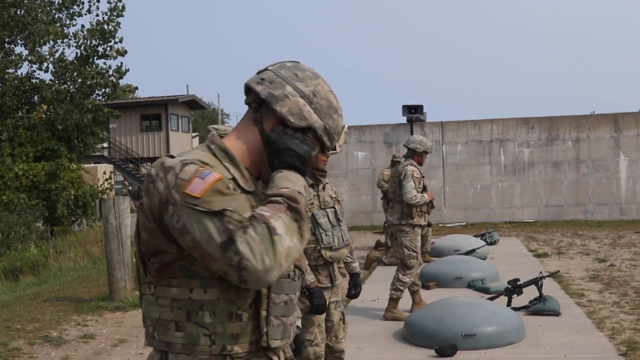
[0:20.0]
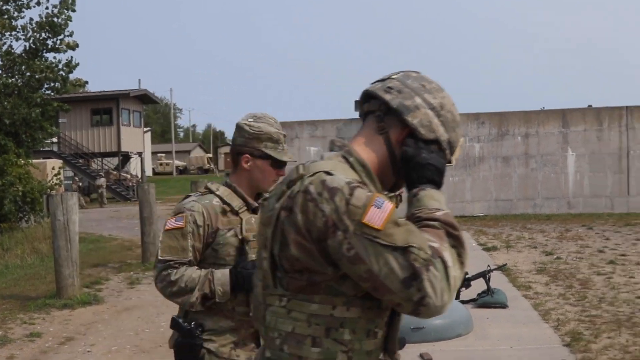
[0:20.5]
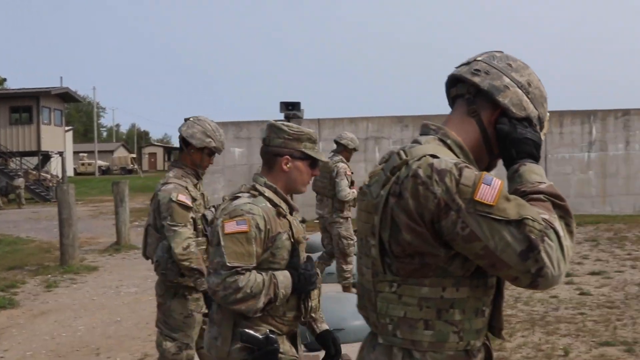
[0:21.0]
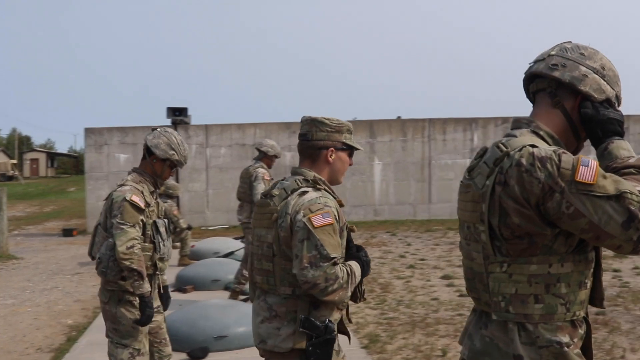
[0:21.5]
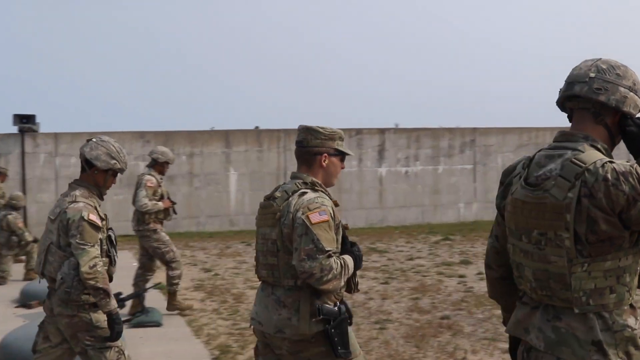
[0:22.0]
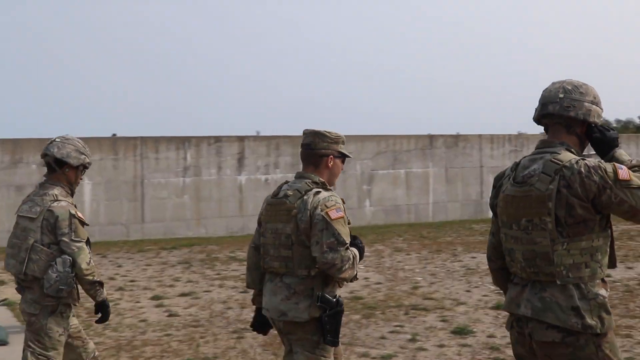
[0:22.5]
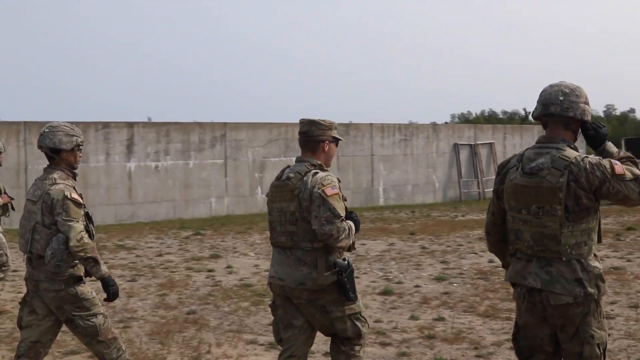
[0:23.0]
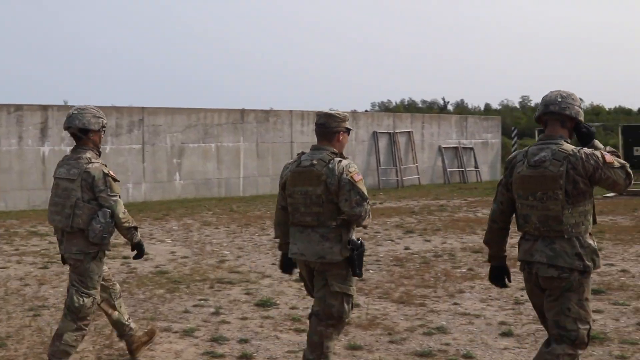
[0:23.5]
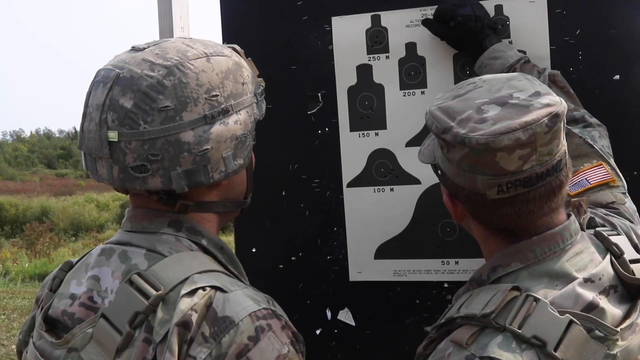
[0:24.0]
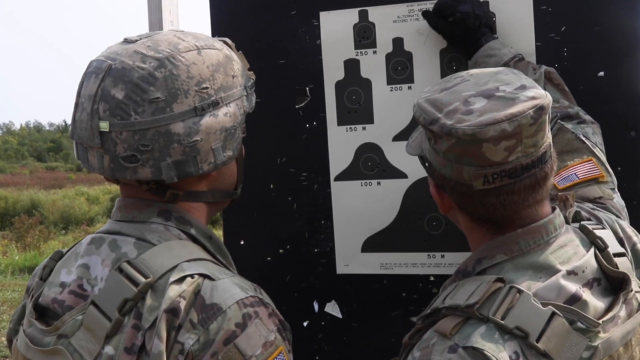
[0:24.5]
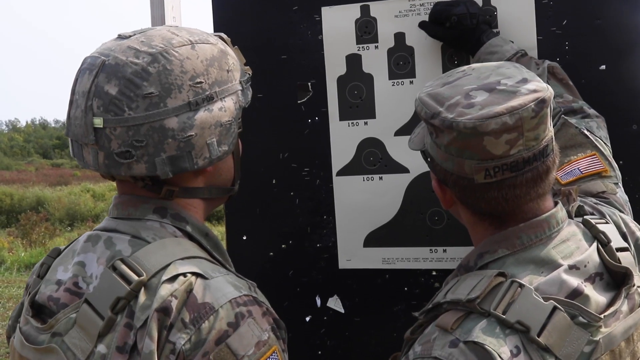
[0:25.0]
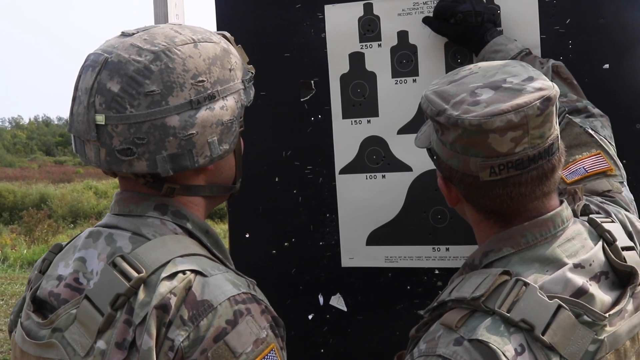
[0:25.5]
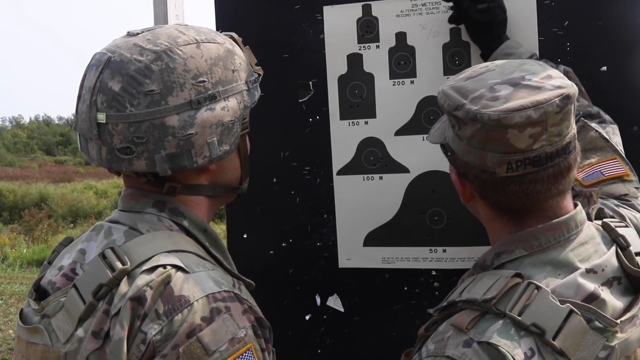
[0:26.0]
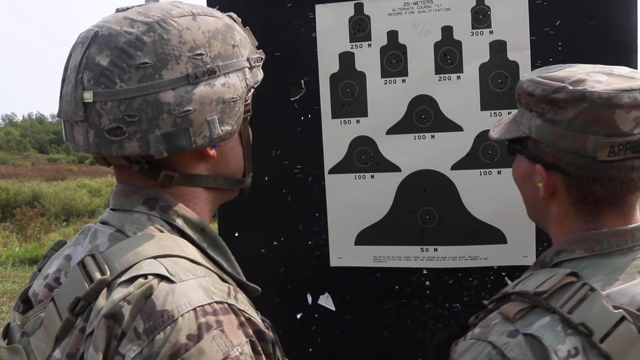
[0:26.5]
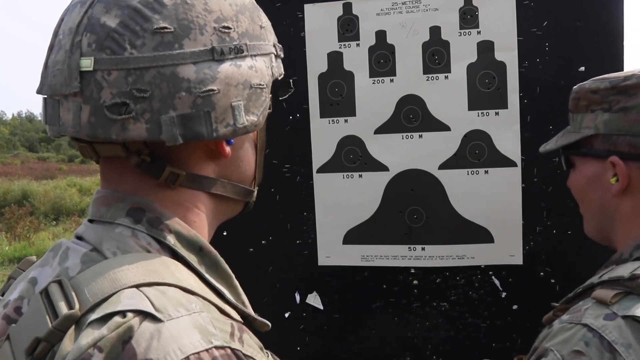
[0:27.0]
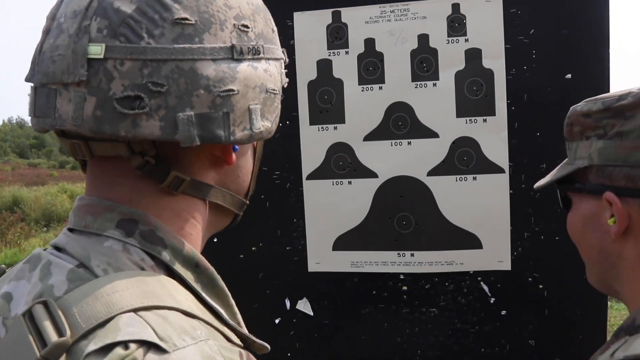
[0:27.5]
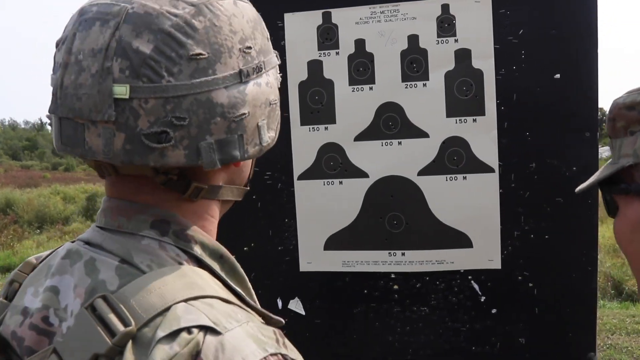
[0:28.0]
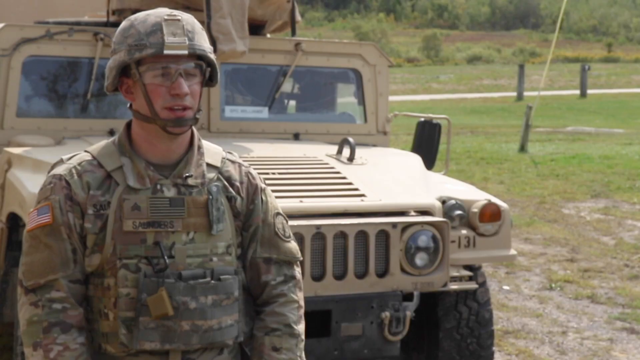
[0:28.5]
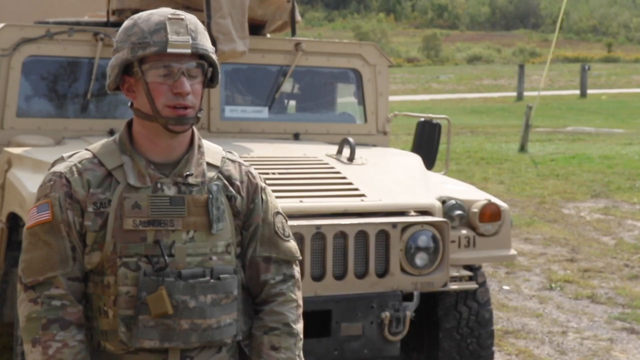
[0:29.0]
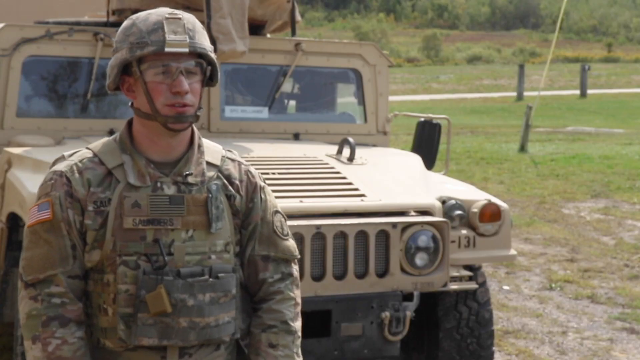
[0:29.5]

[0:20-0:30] On artillery training grounds at a shooting range, someone in high command, the shooter's superior, reviews the range targets to see how well the person was able to hit them.